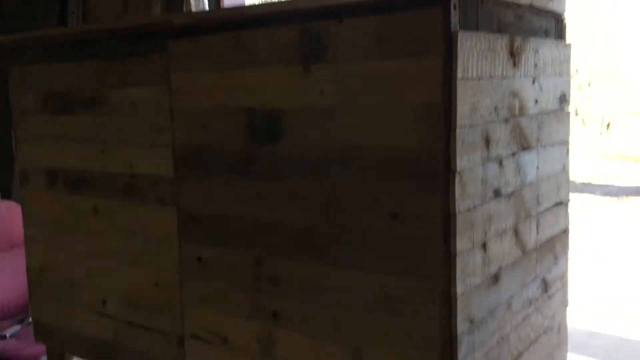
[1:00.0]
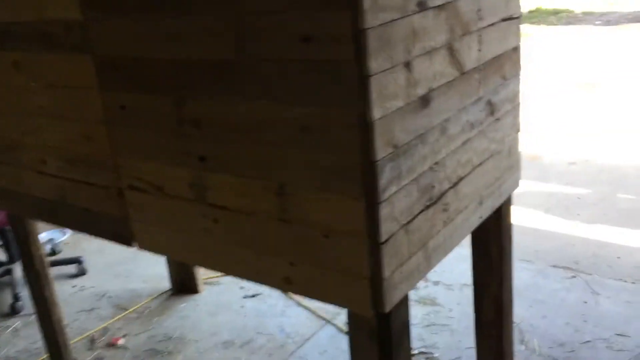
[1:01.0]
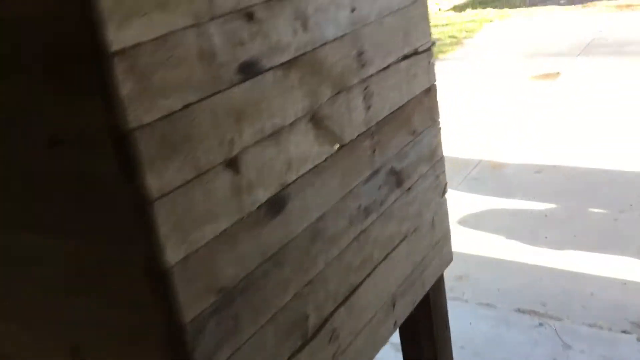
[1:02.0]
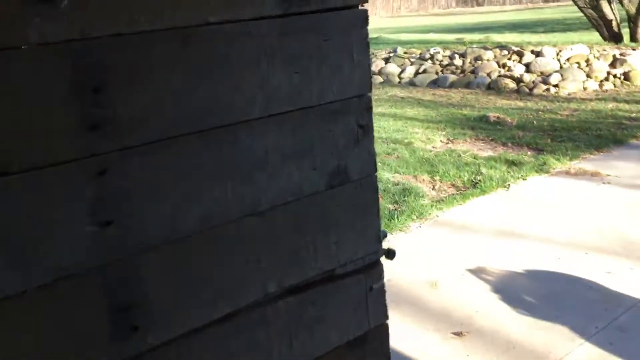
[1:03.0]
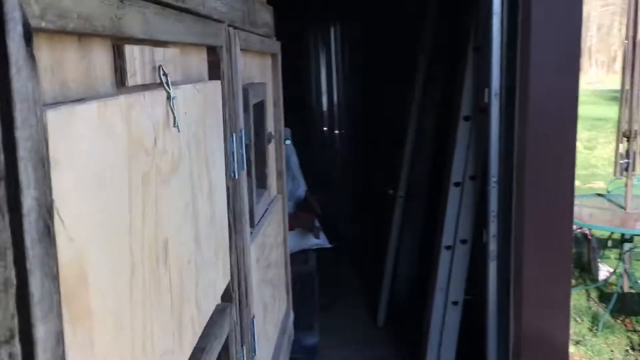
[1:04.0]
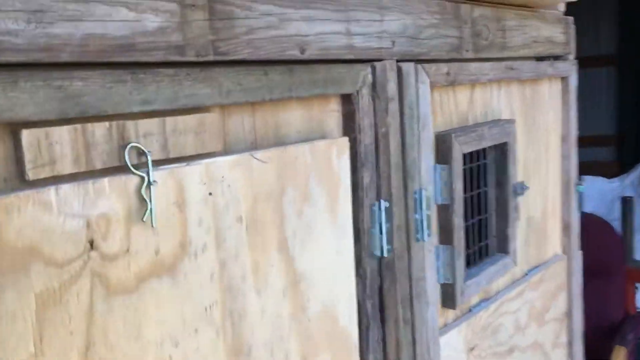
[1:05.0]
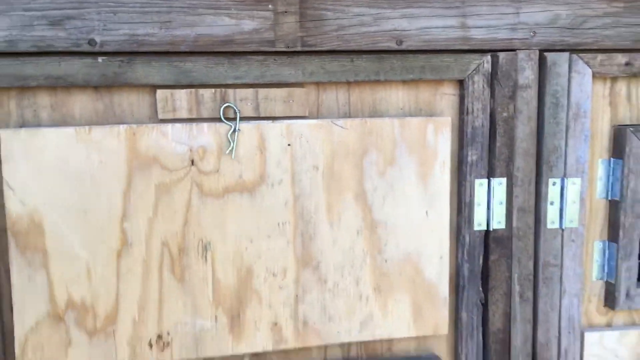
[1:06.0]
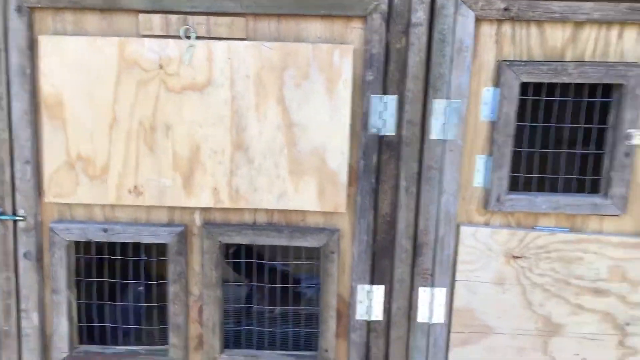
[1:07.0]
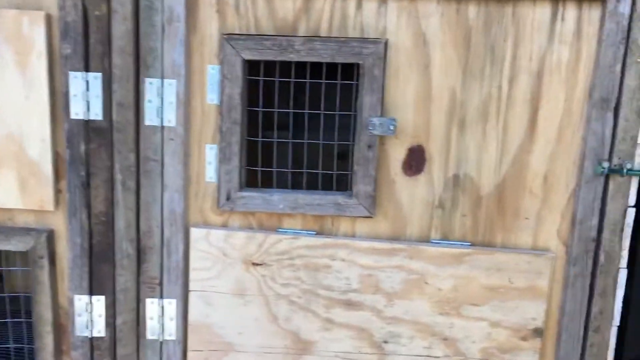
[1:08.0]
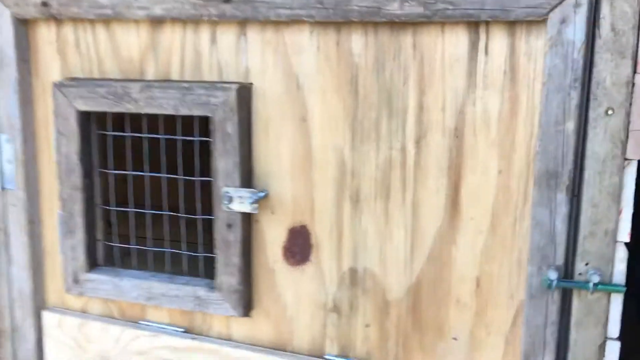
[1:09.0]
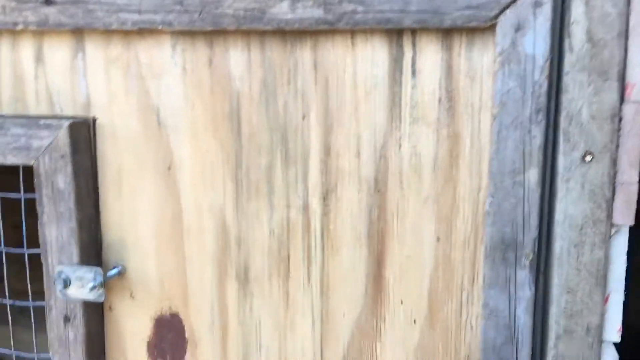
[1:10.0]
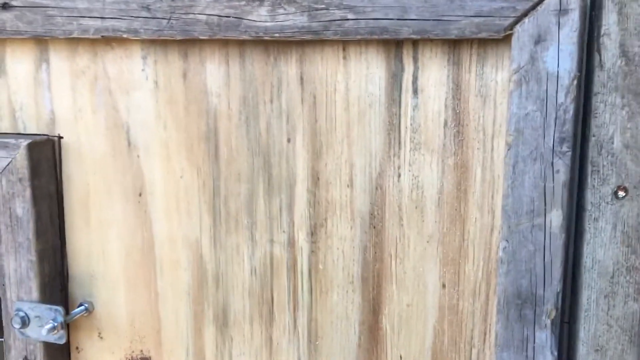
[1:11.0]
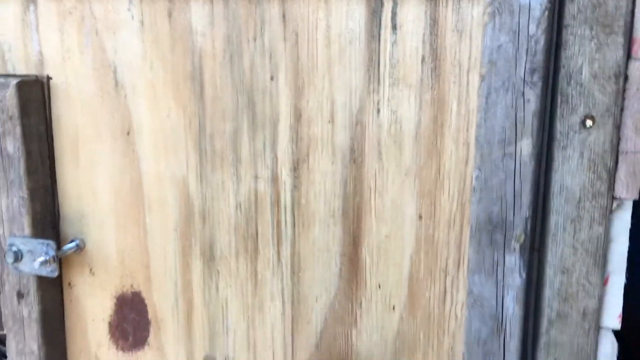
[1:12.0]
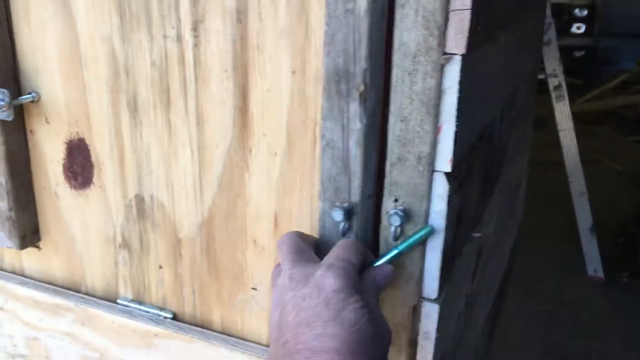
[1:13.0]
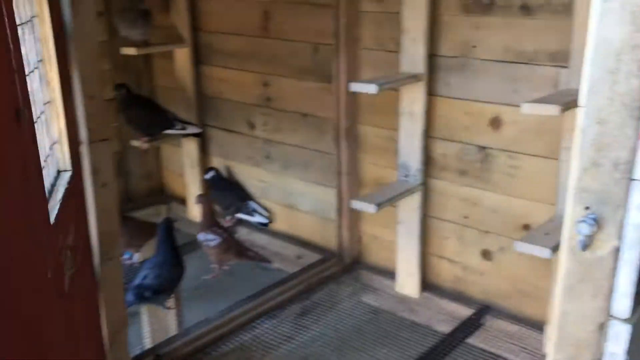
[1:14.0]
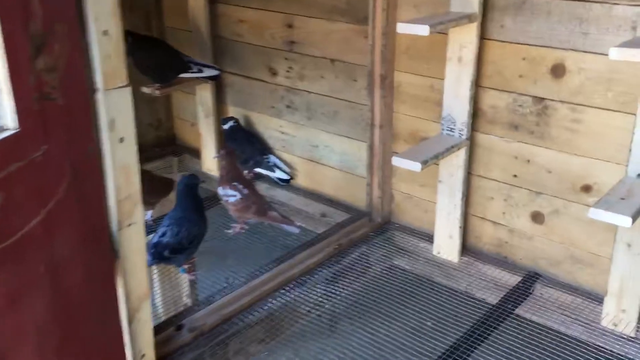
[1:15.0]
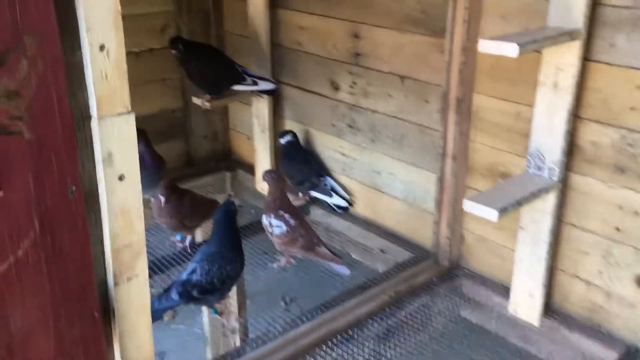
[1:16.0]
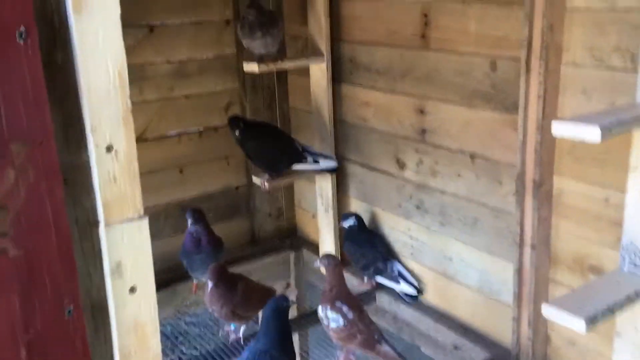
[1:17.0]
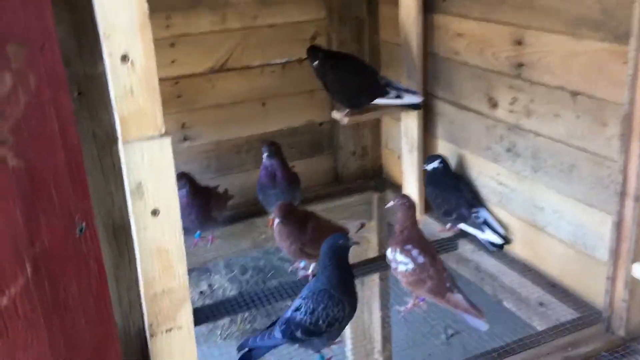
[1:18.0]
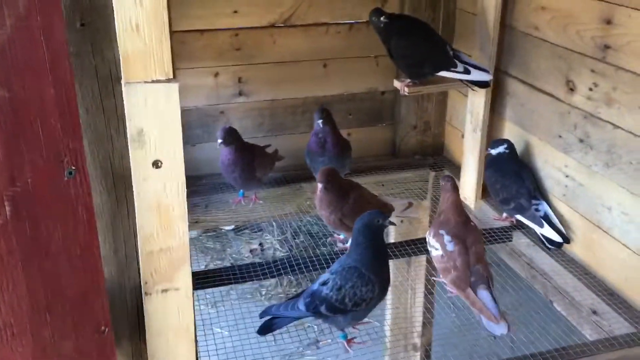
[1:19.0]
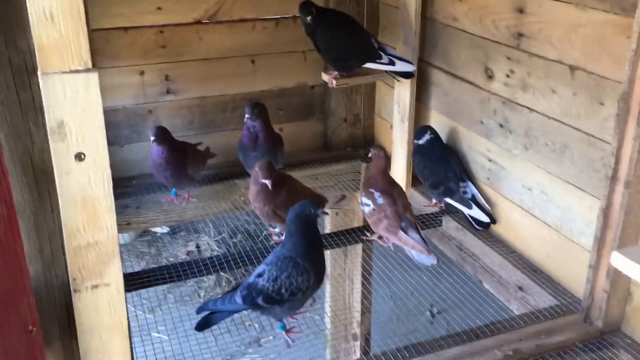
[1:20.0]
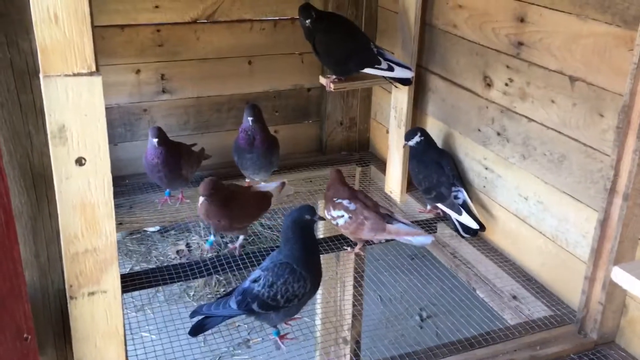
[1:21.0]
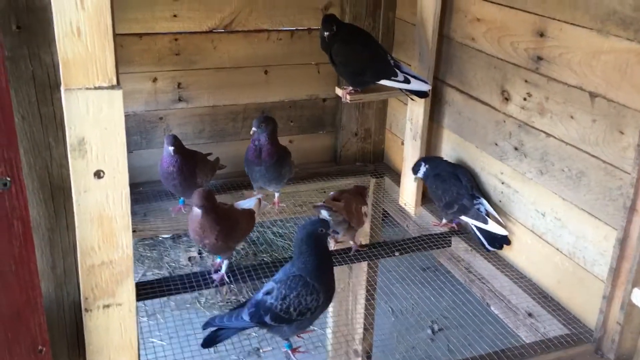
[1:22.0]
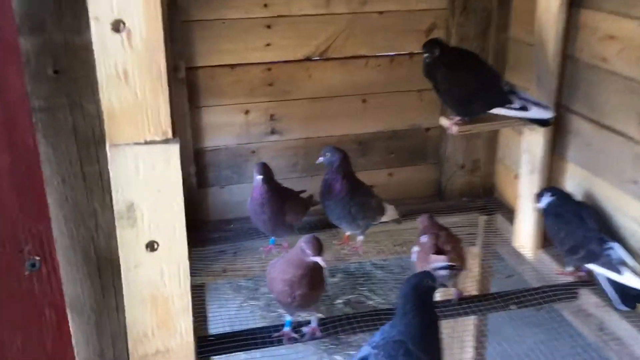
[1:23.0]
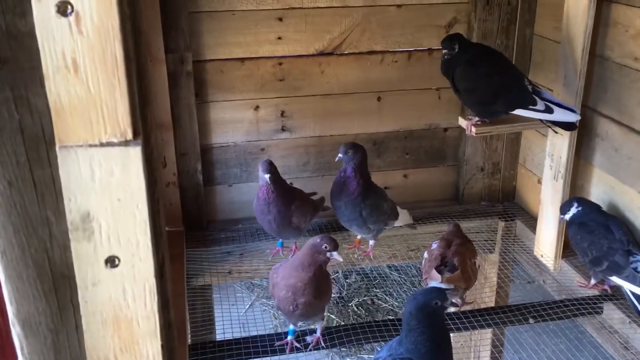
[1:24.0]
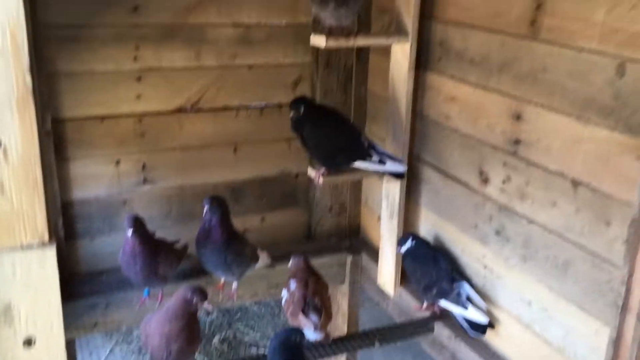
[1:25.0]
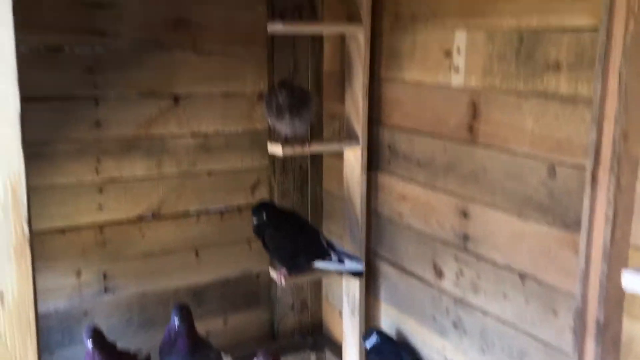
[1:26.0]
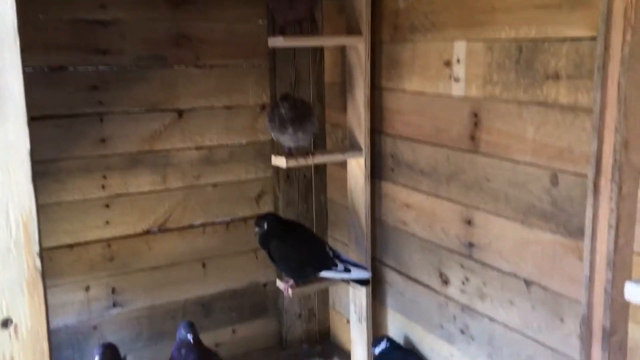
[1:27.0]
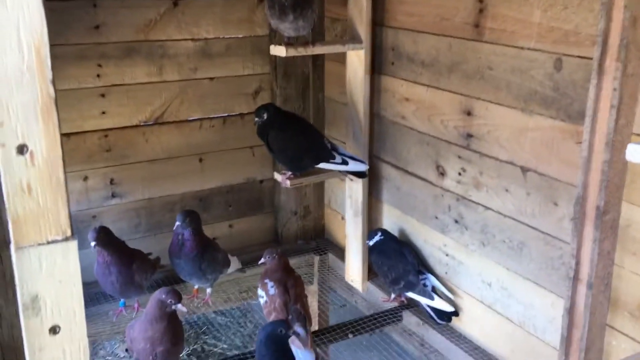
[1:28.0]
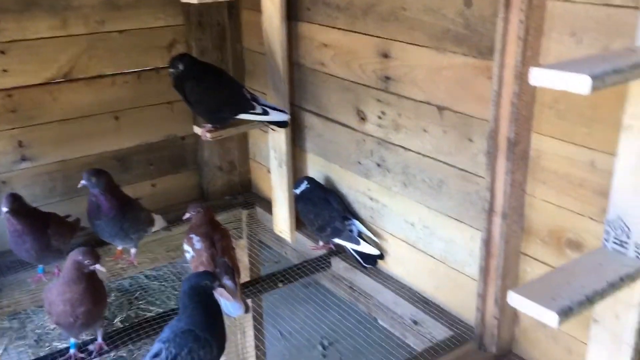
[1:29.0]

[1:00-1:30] From the far side of the coop, the man moves back to the front and shows the doors, which are made of a lot of wood, zooming in close to the wood. He then shows the lock and how to open it. Inside the coop are pigeons, not chickens: five black ones and two brown ones. The inside of the coop has nesting hooks, and its bottom is made of chicken wire. The birds look happy and content in the coop.